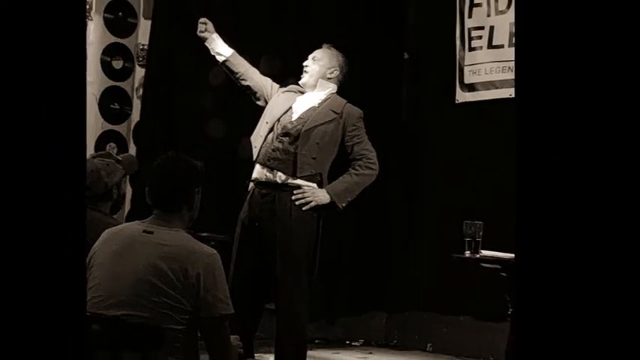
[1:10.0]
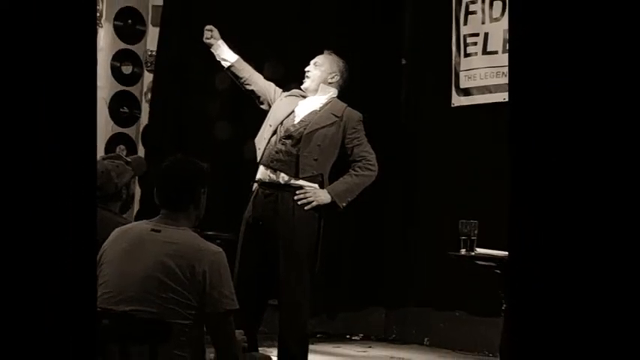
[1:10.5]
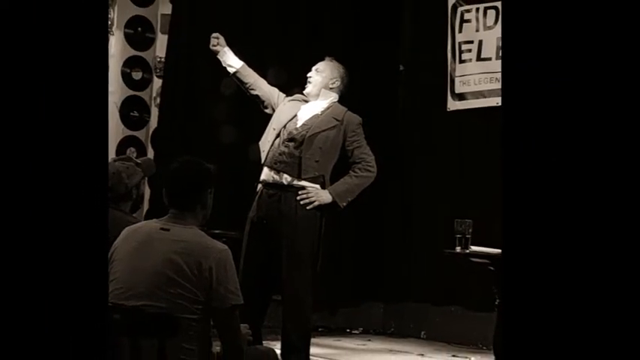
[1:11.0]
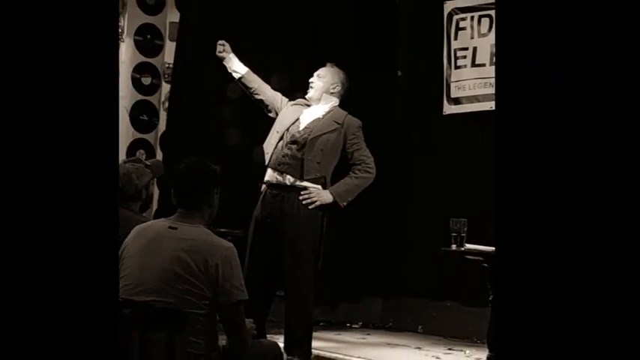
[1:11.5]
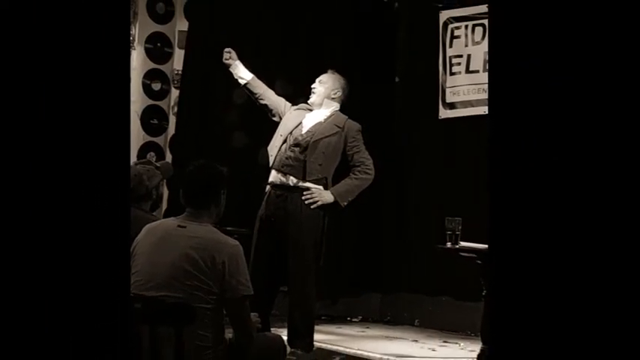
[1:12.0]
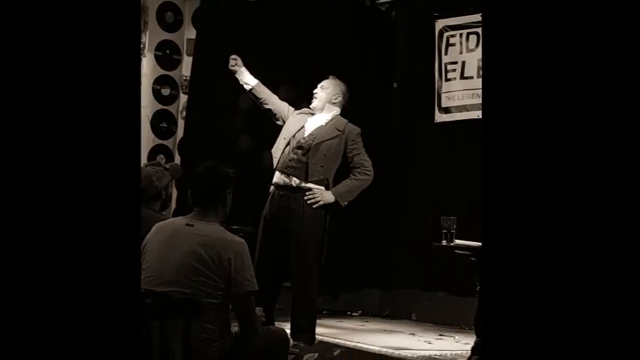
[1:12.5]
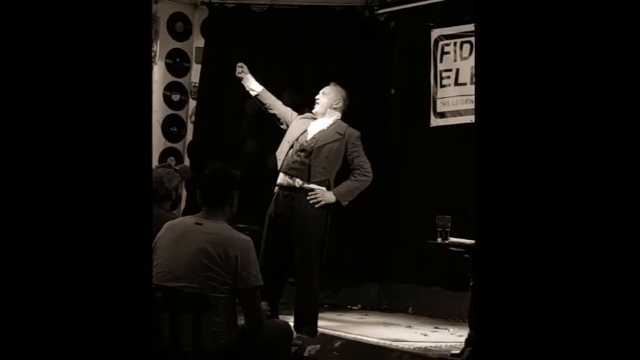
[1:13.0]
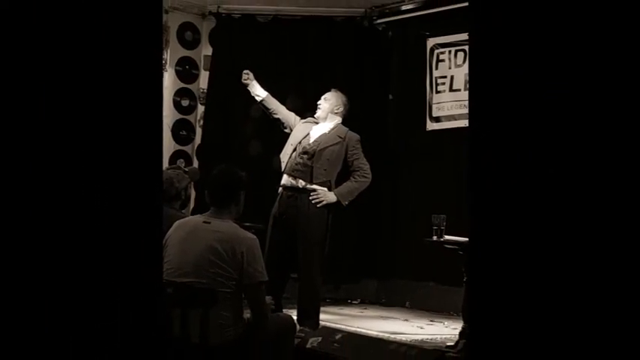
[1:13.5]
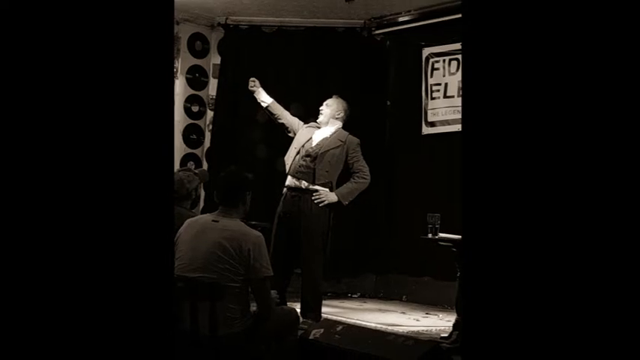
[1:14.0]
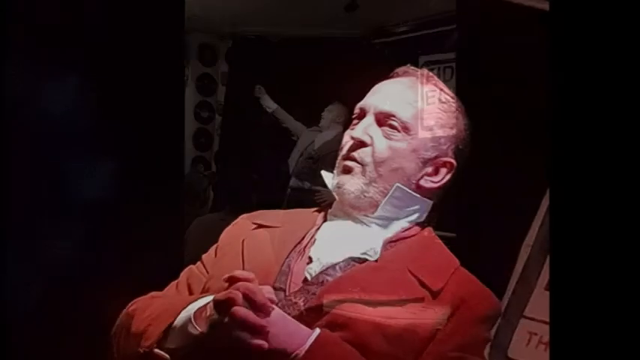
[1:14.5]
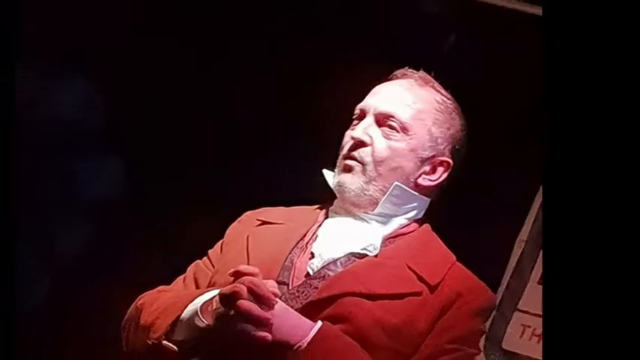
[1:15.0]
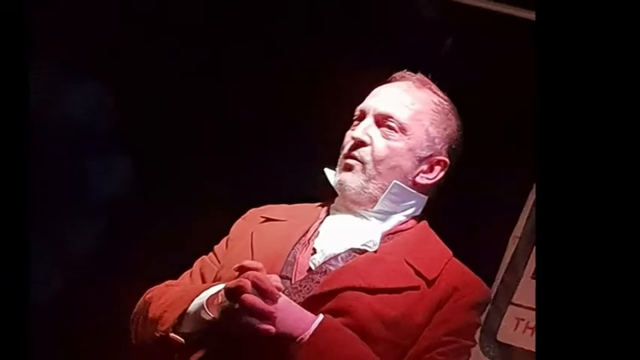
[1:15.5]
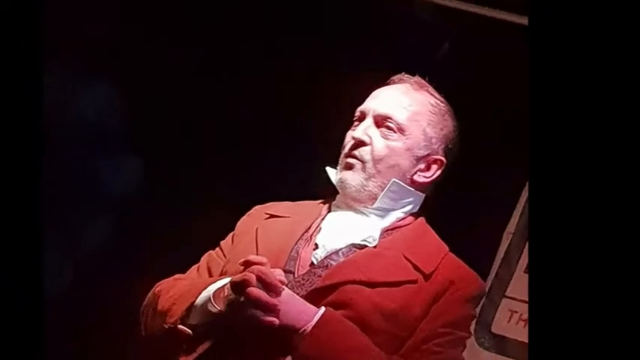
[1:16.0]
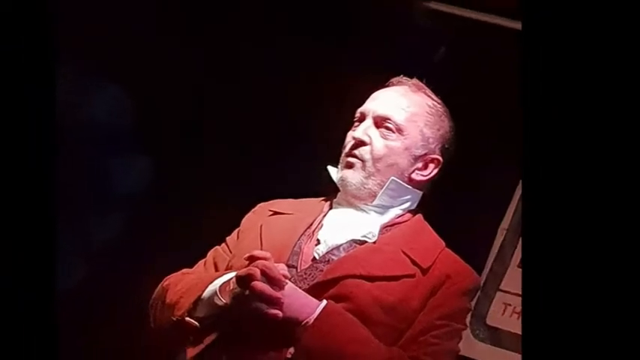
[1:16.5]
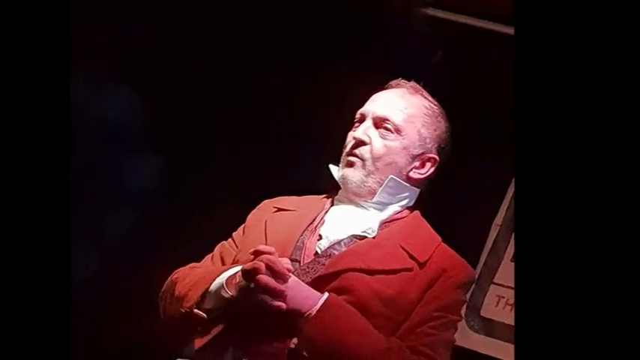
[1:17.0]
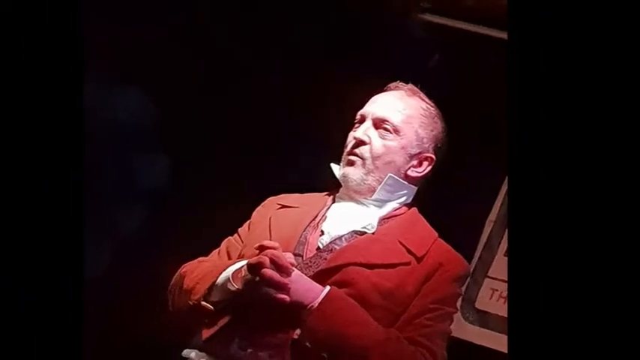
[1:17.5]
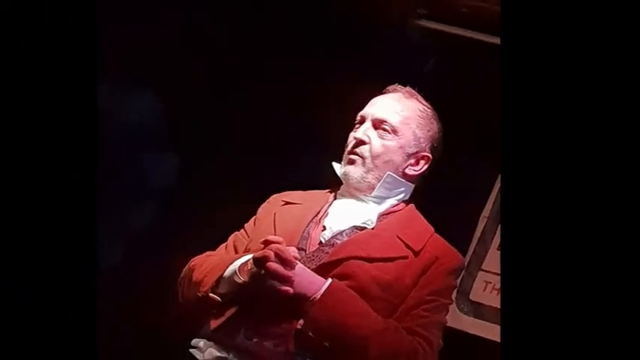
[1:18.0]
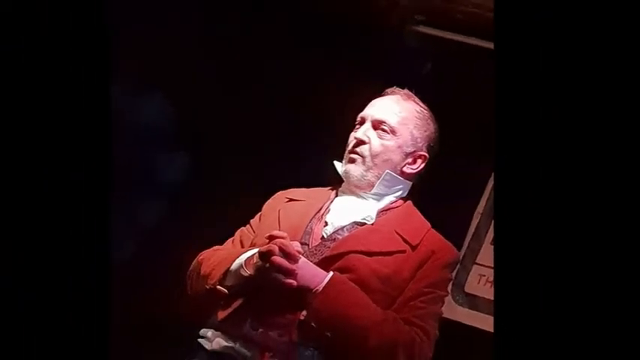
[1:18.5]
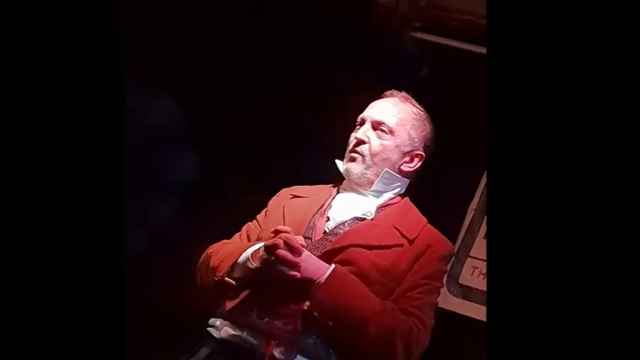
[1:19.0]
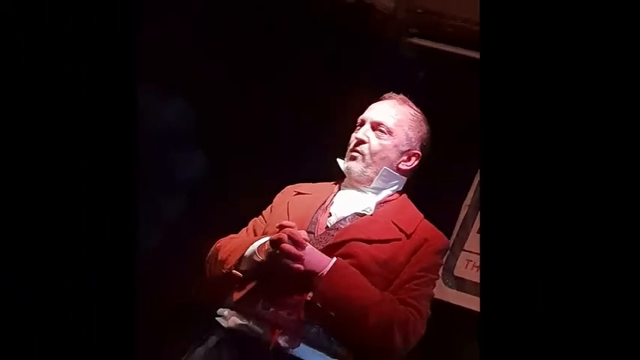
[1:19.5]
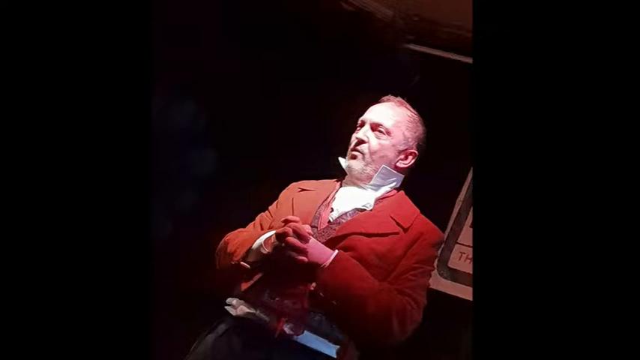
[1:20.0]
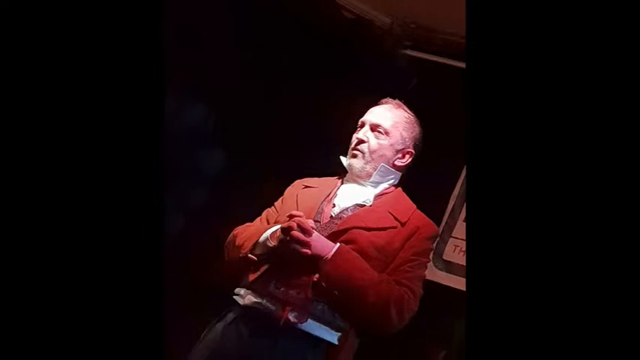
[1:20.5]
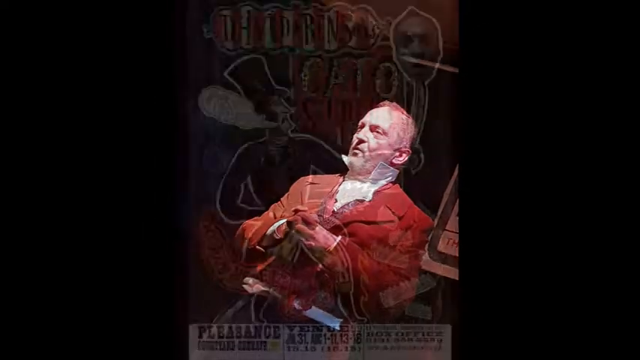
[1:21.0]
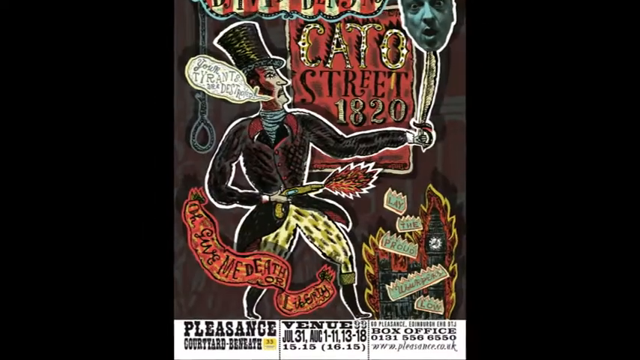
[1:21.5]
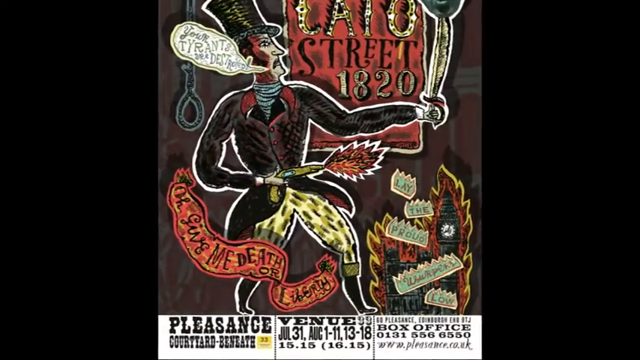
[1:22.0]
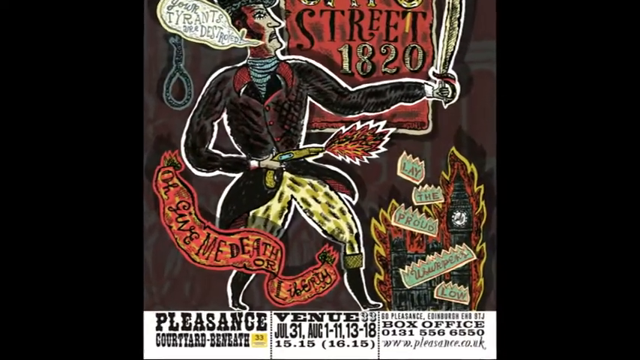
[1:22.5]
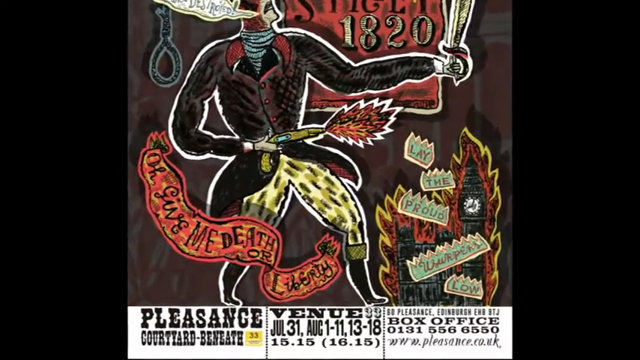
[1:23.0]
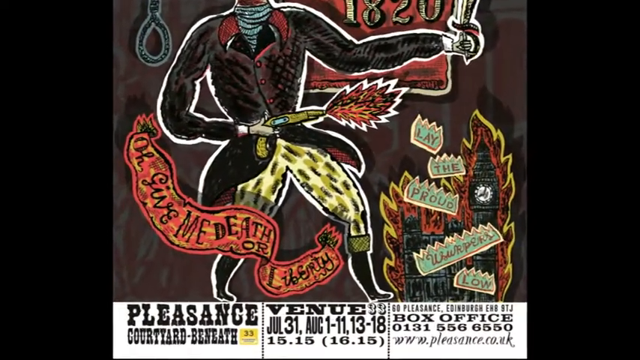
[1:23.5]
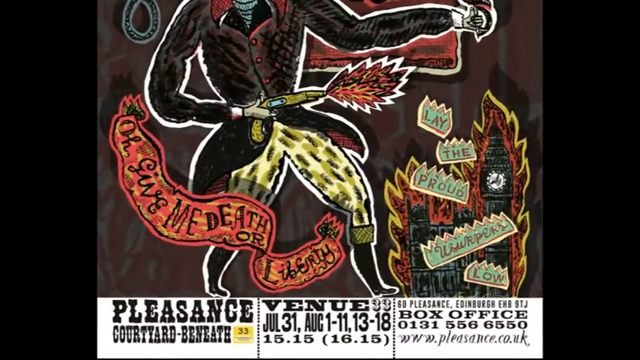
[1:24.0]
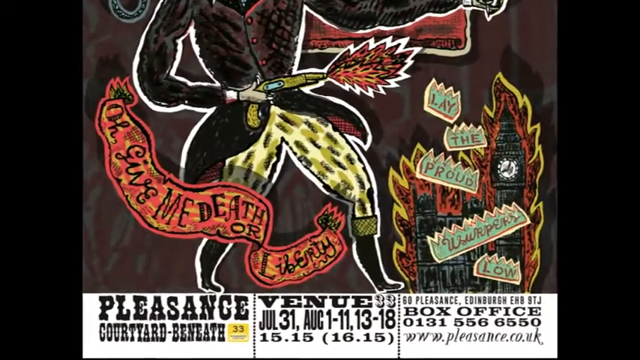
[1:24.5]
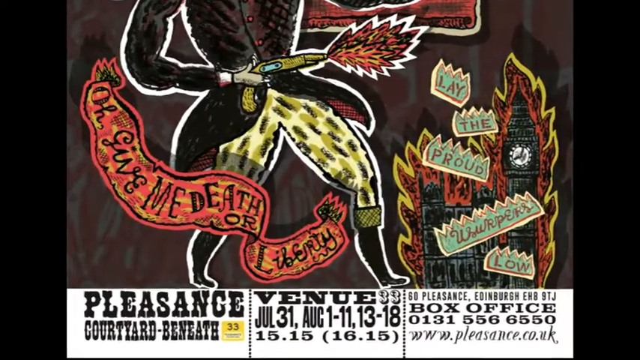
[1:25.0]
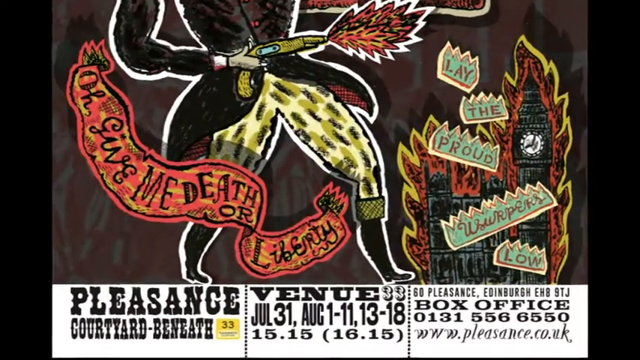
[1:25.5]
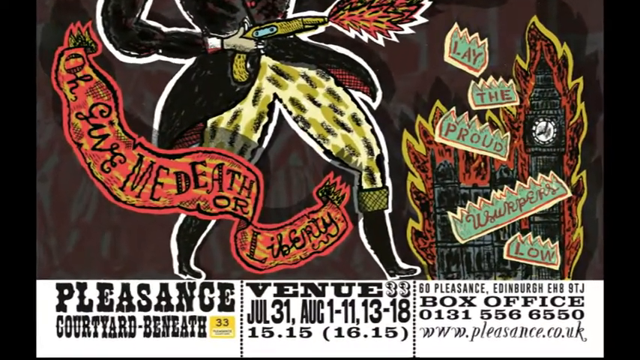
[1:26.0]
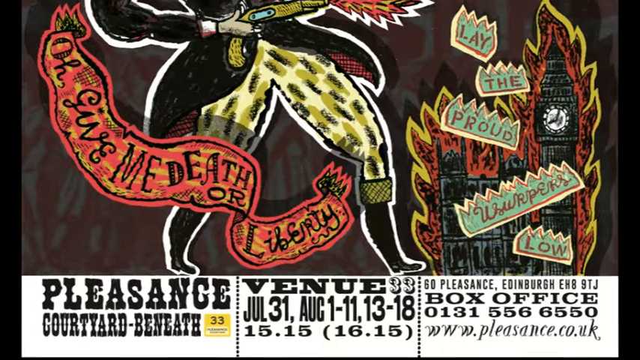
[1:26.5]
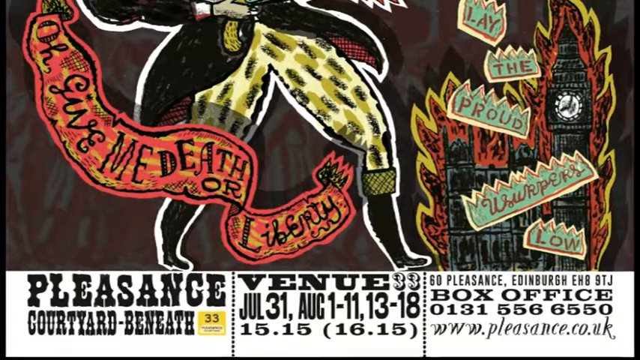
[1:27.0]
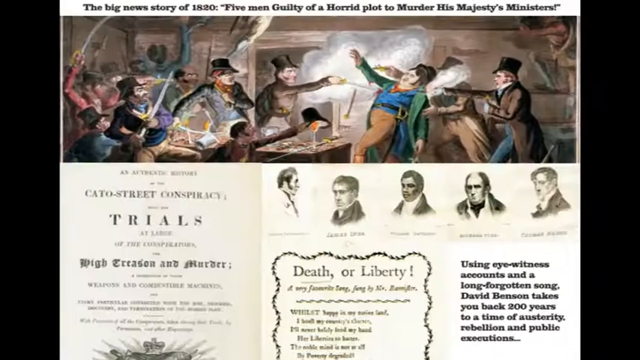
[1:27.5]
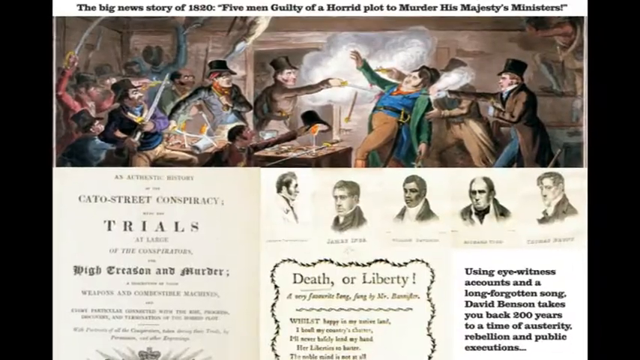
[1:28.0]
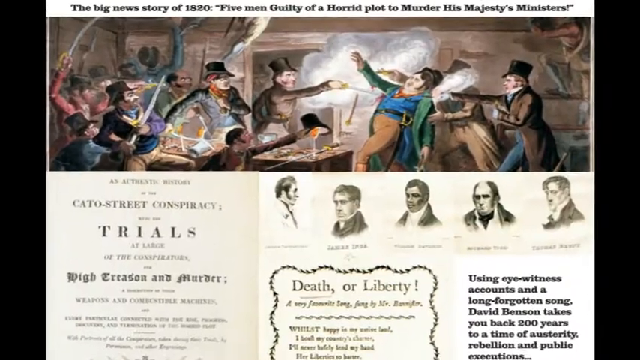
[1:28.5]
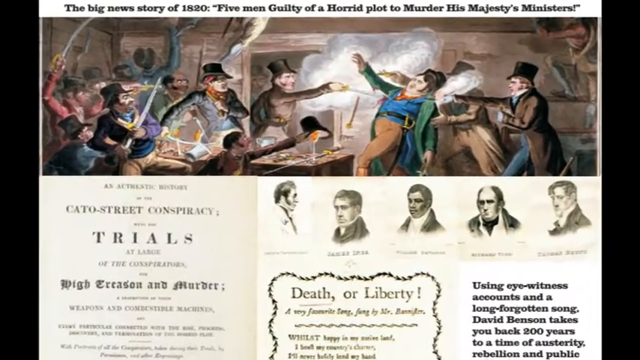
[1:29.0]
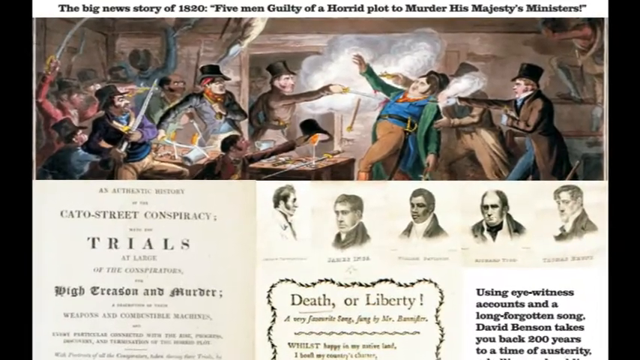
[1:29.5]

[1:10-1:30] A black-and-white image shows a man with his right arm raised diagonally in the air in a fist and his left hand on his left hip, looking towards the top left. He has white skin and short hair and wears a grayish jacket and dark pants. At the bottom left, two men with their backs to the camera, one wearing a hat, look on at him. The camera zooms out on the photo, revealing a large black curtain in the background and a whiter-colored roof. The scene changes to the same man in a close-up as the camera sort of zooms outward. He has white skin and short hair, is an older man, maybe in his 30s or 40s, and wears a red jacket with a white inner shirt; his arms and hands are clasped together in front of him as the camera zooms out. The scene changes to the same poster seen earlier, featuring the person in a black jacket and black top hat holding a weapon in his right hand and the words "Cato Street, 1820". The camera sort of zooms in on the bottom portion of the poster, which shows the venue written on it. The scene changes again to the same drawing seen earlier of a group of people with swords and weapons fighting each other inside a small room.